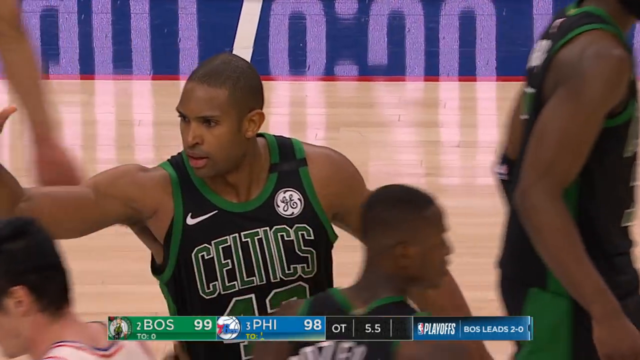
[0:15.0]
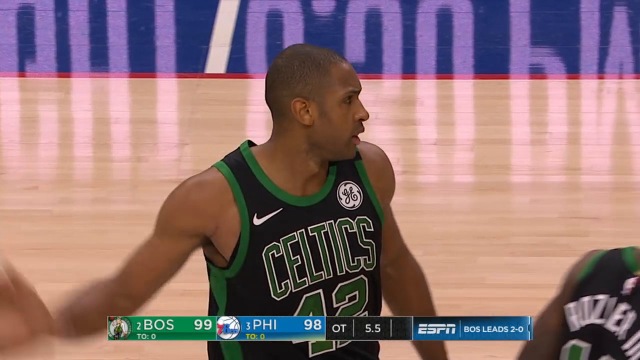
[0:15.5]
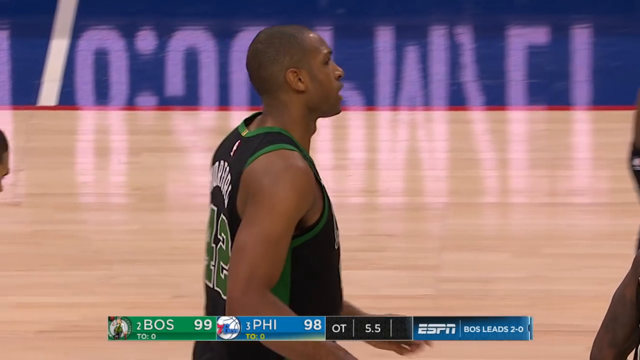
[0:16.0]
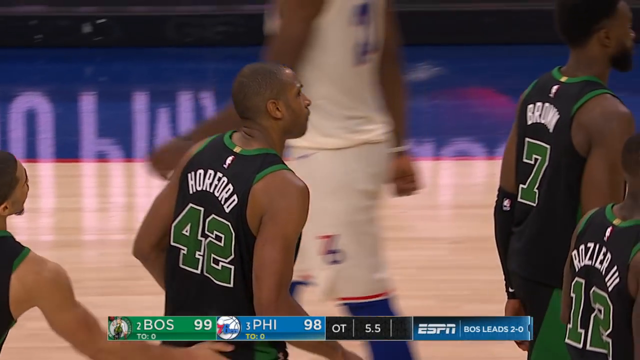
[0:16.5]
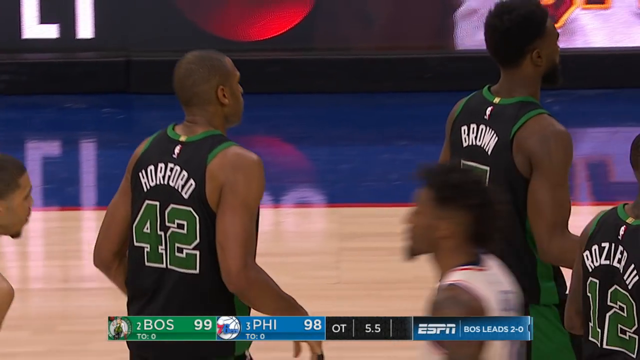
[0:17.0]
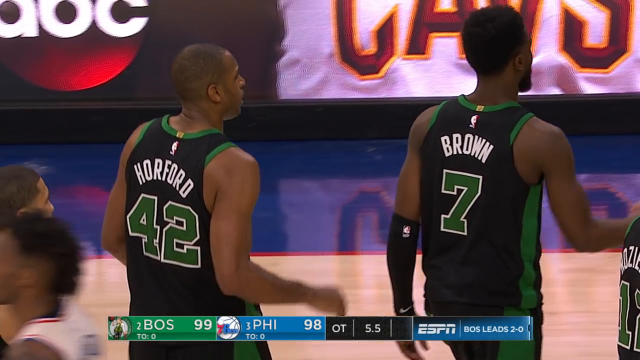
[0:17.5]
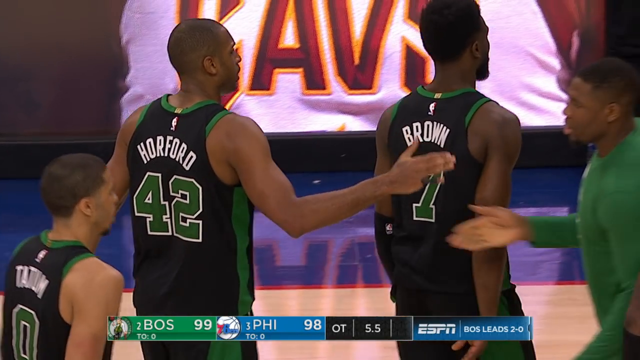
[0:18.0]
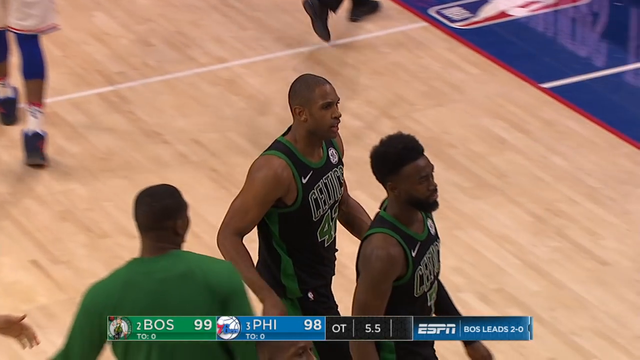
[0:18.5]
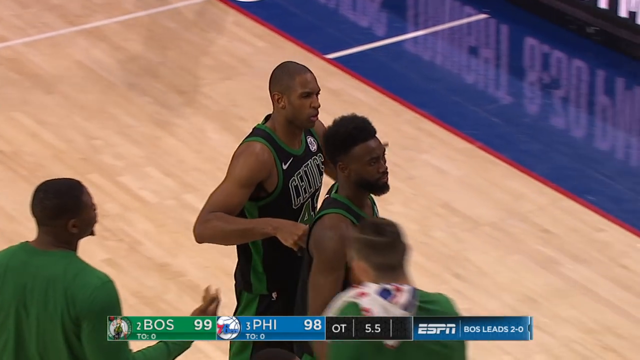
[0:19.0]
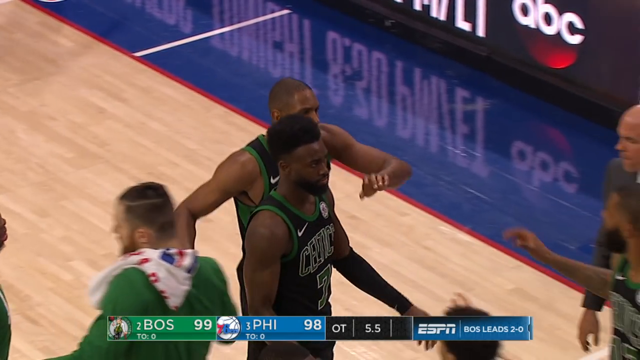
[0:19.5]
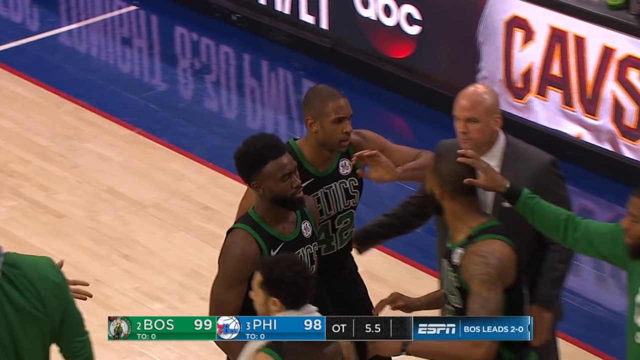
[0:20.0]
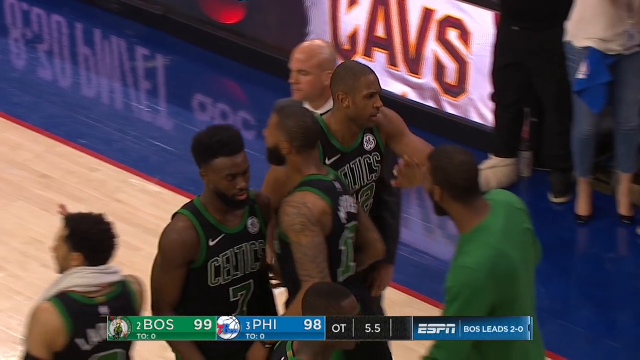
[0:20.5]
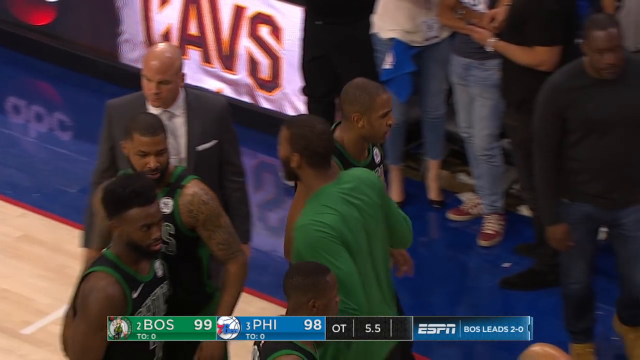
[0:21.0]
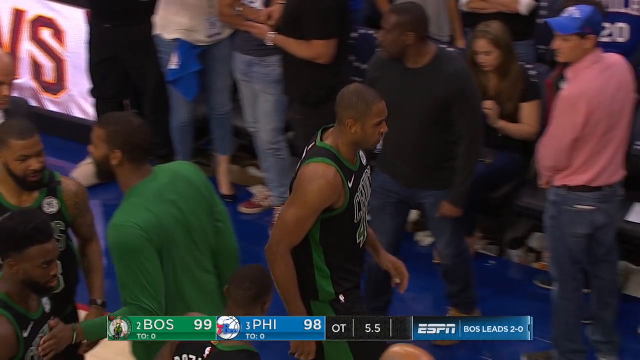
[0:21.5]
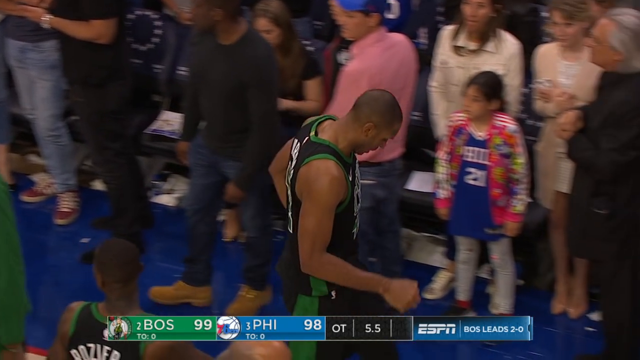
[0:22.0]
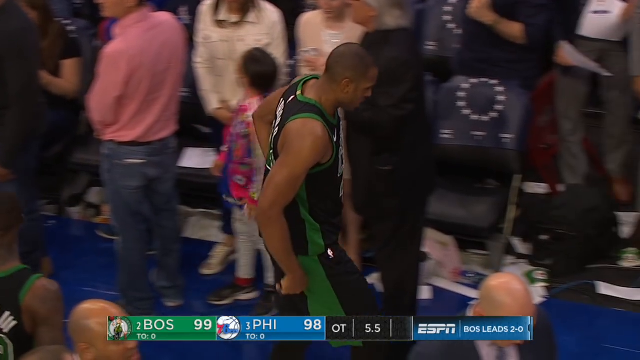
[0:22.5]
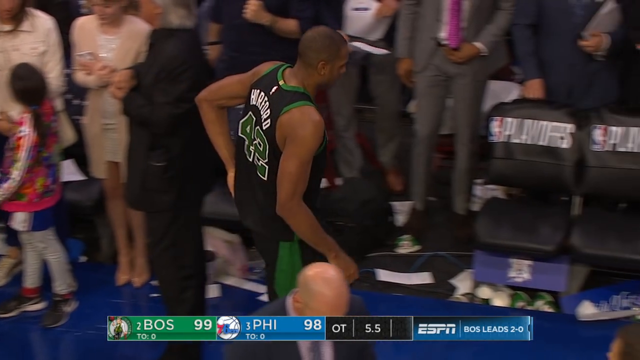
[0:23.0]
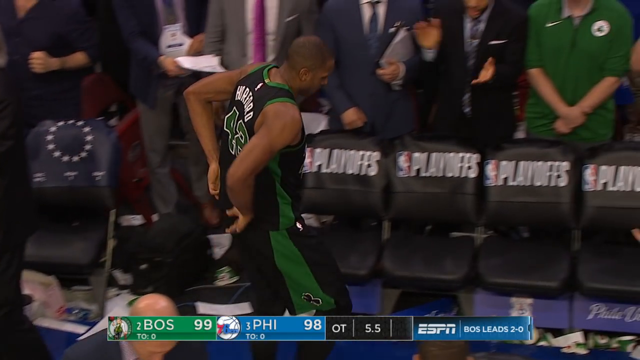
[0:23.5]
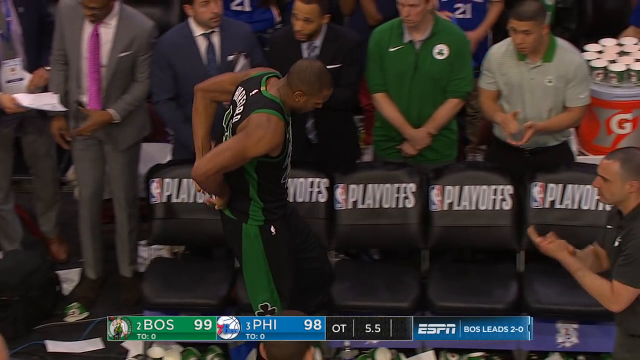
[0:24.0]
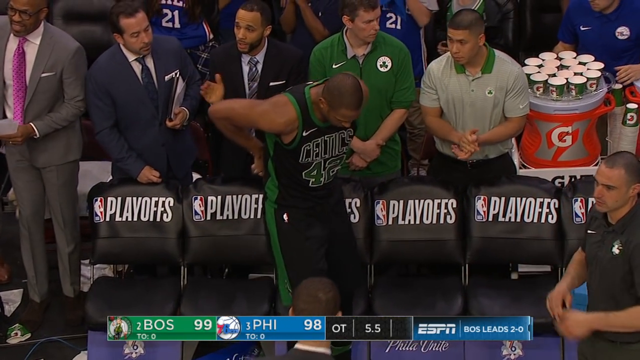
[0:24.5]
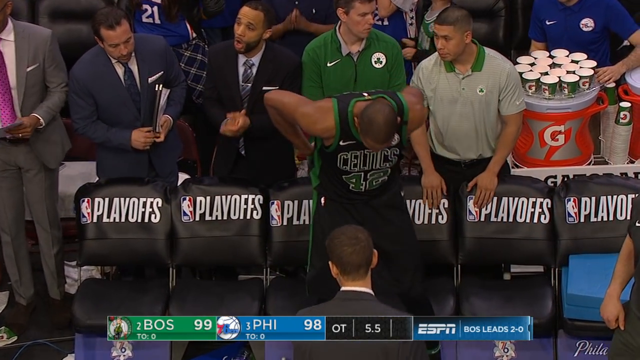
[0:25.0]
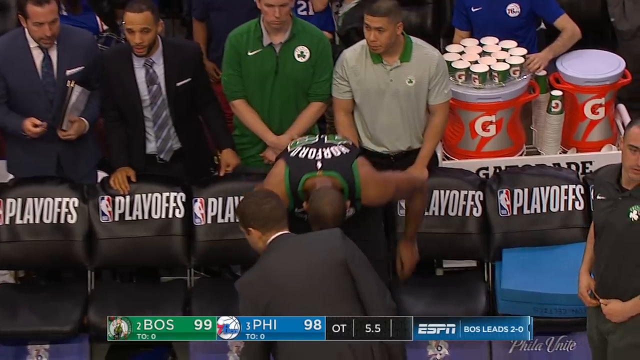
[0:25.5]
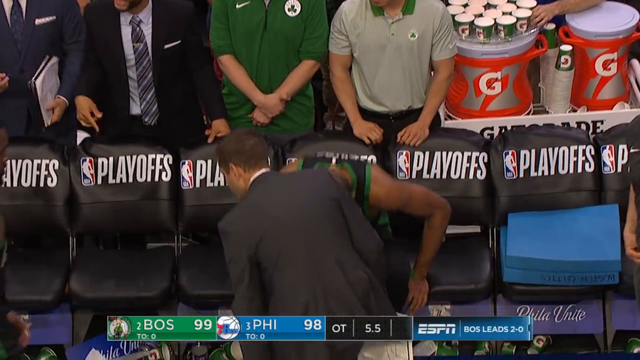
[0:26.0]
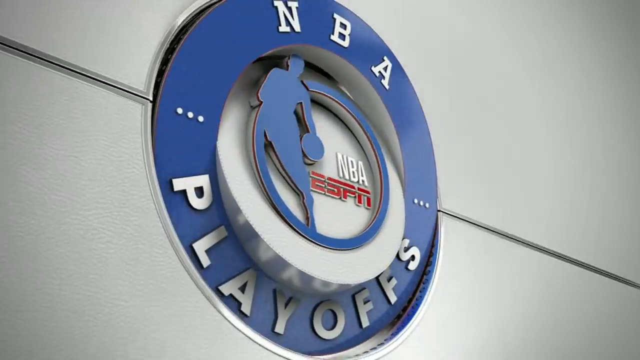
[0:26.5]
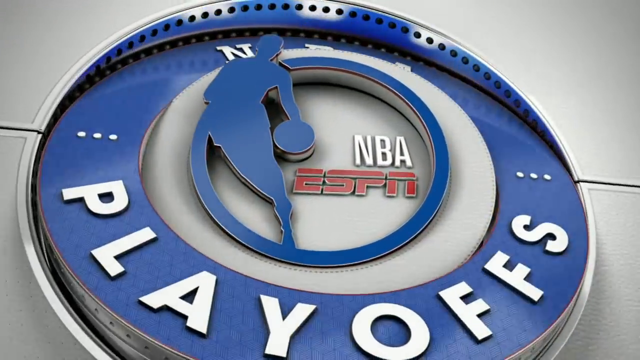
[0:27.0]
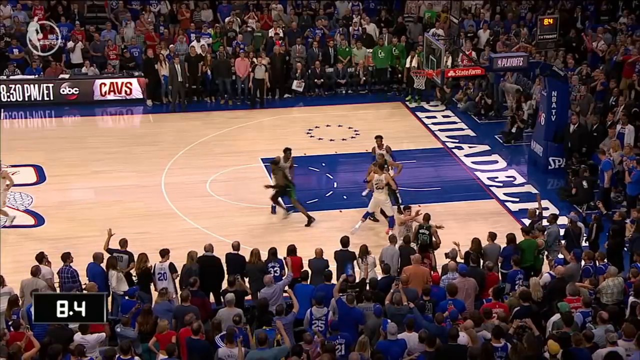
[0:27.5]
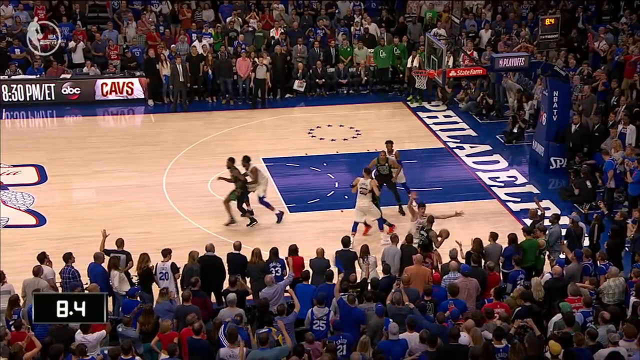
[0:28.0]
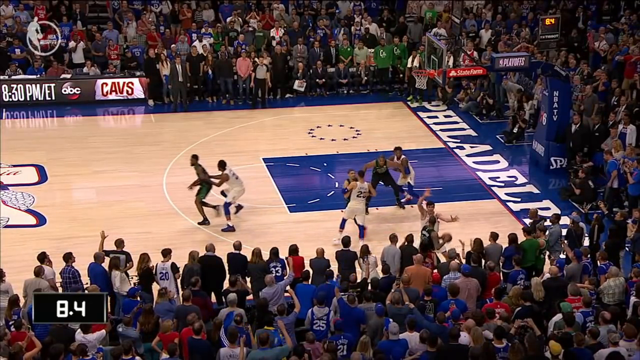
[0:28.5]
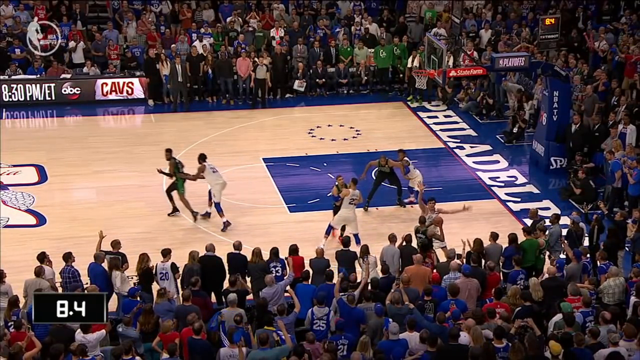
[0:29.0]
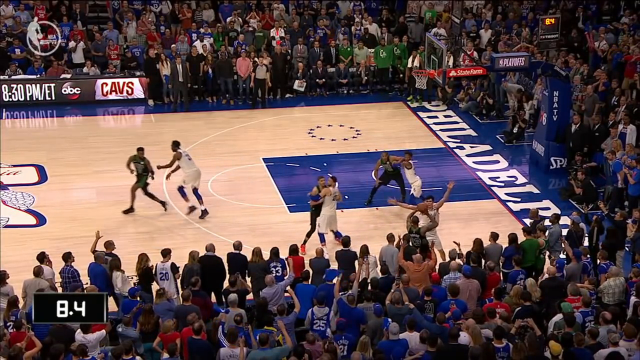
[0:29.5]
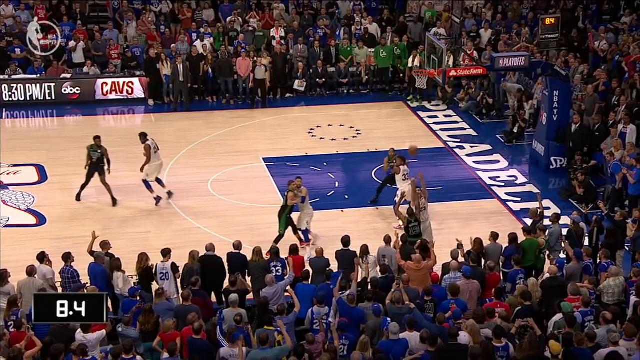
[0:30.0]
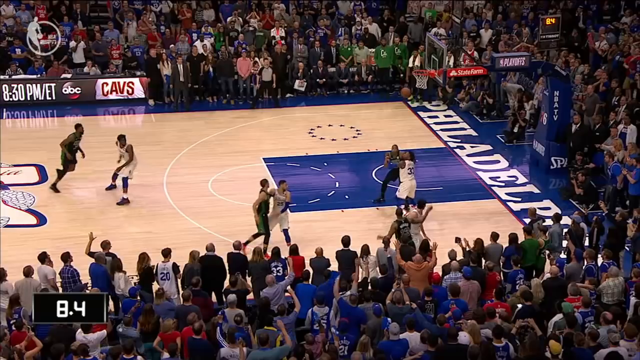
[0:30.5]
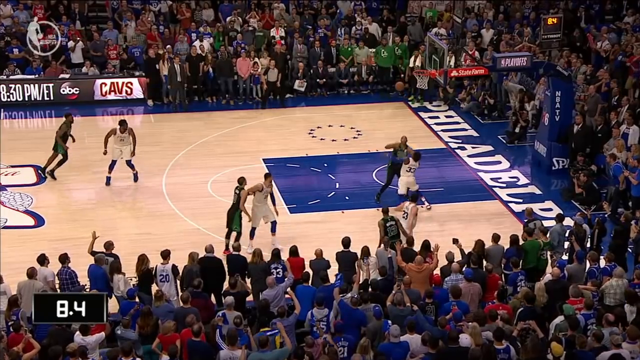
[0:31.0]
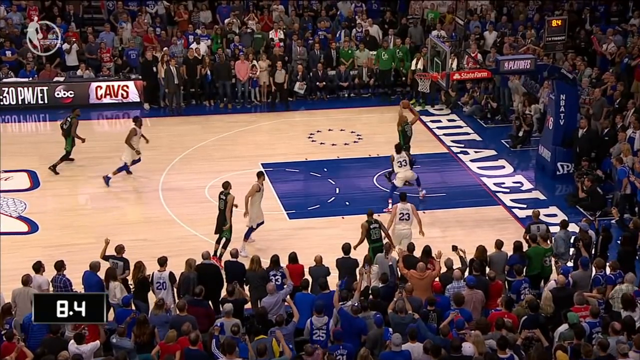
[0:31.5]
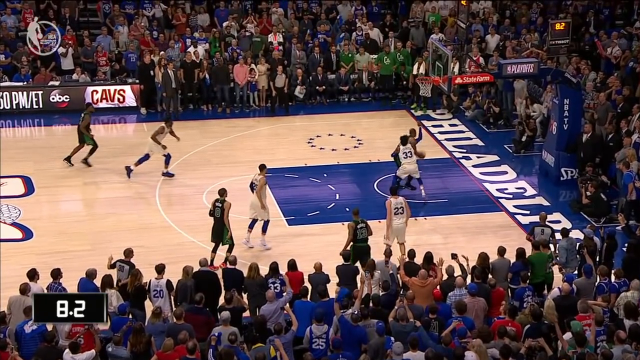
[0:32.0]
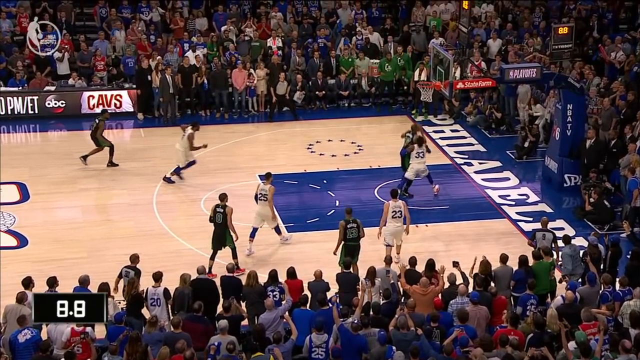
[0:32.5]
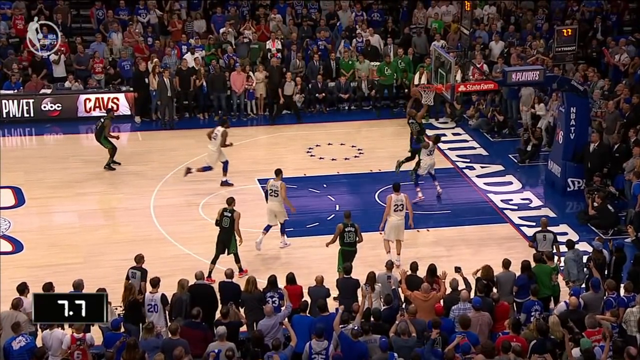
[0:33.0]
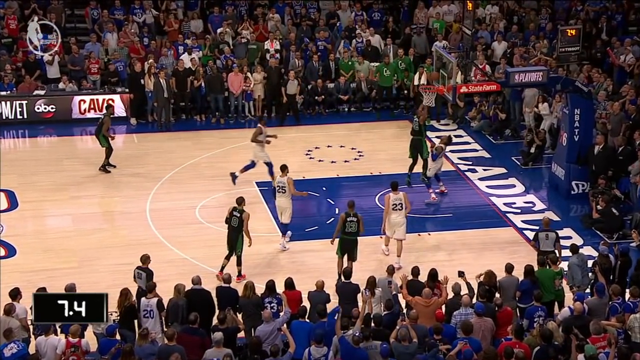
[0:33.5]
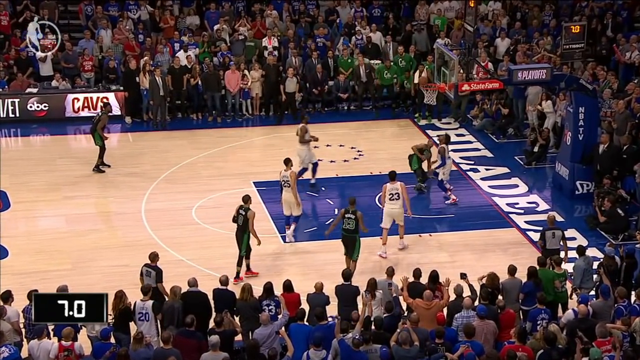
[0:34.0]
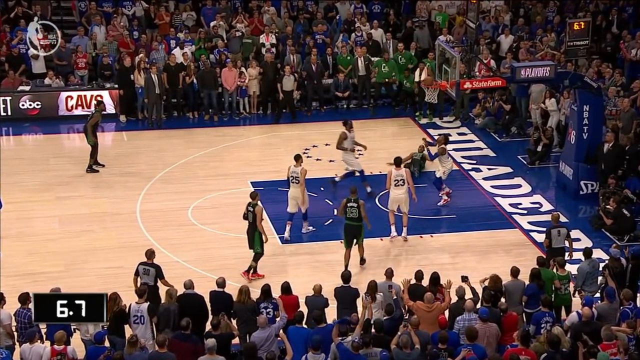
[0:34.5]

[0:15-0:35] A close-up shows the Boston Celtics still celebrating the shot. The camera keeps zooming in on the player who made the shot and cartoonishly fell, who is now sitting down in what seem to be the bench chairs. A replay then shows the play: a Celtics player passes the ball to a teammate right in the paint in an arched way, almost like a shot but not at the basket, and the teammate takes the shot and again cartoonishly falls down. The game is apparently in overtime, with the Celtics at 99, the 76ers at 98, and about 5.5 seconds left. The players appear to celebrate the win. During the replay, a small transitioning logo of NBA ESPN Playoffs appears.